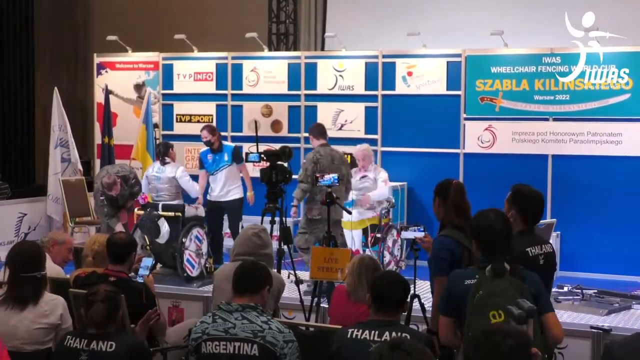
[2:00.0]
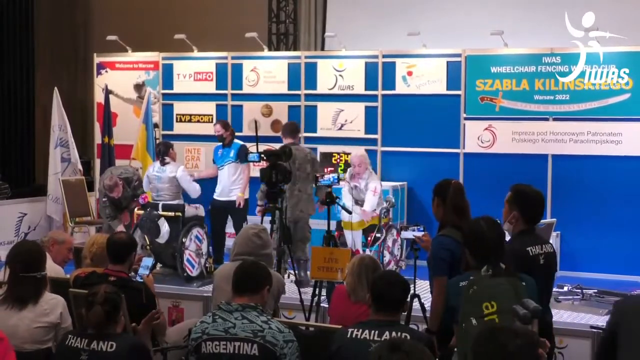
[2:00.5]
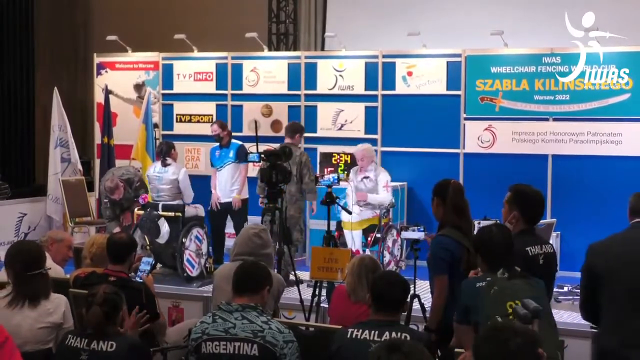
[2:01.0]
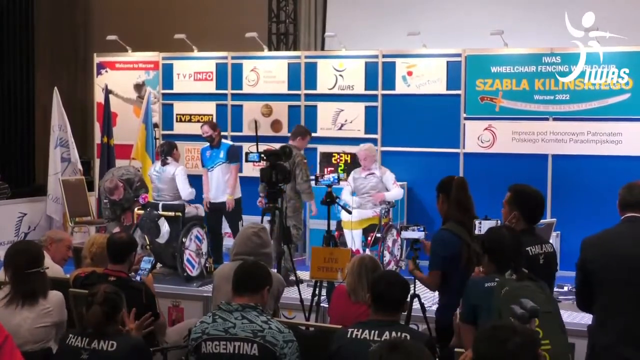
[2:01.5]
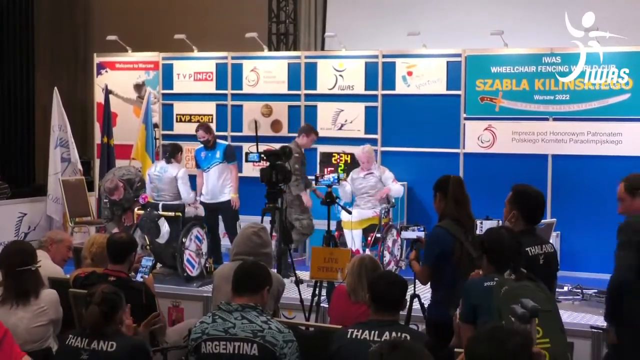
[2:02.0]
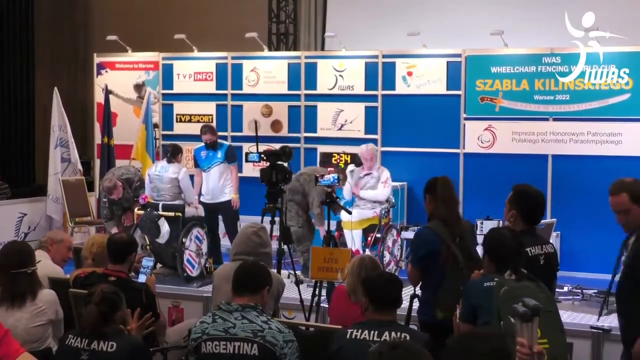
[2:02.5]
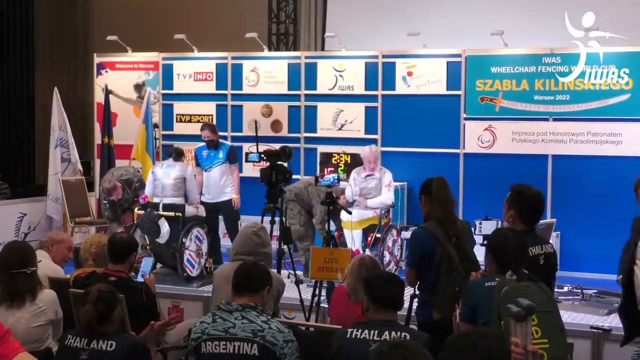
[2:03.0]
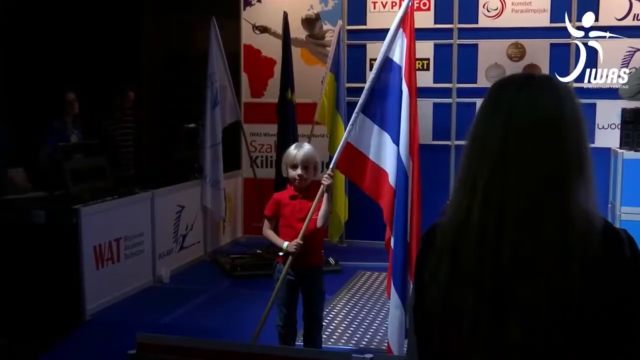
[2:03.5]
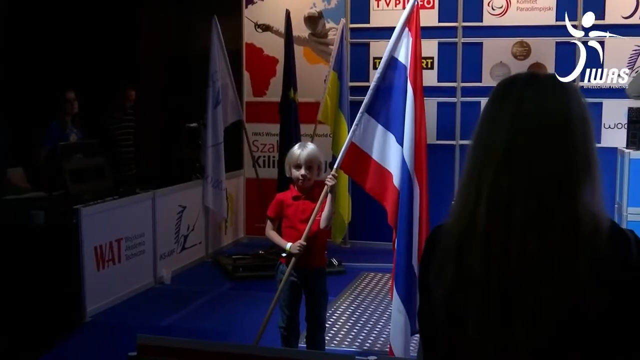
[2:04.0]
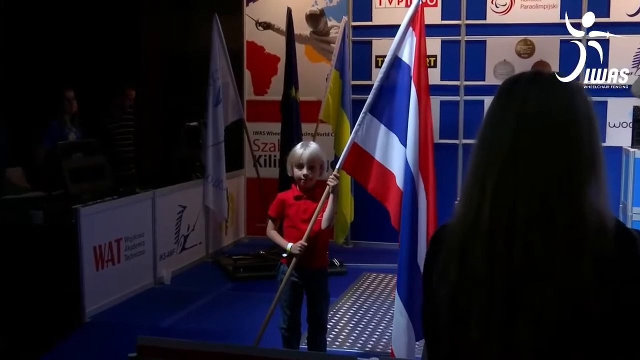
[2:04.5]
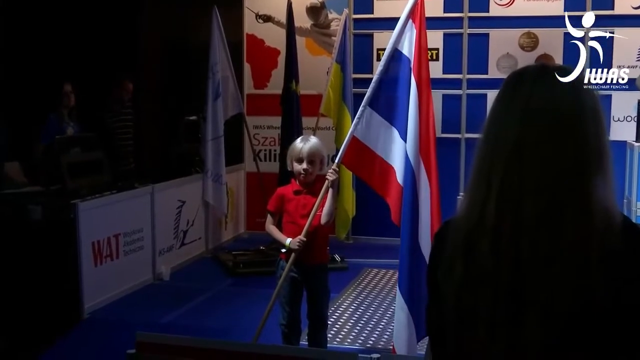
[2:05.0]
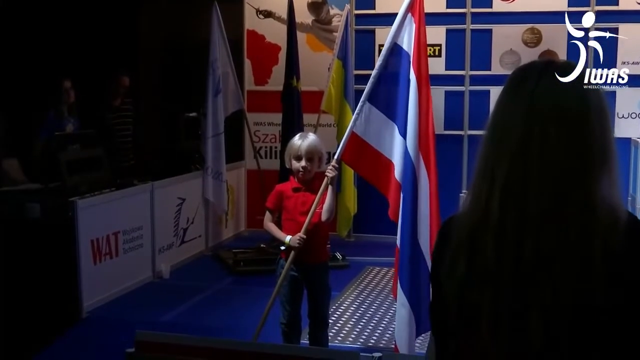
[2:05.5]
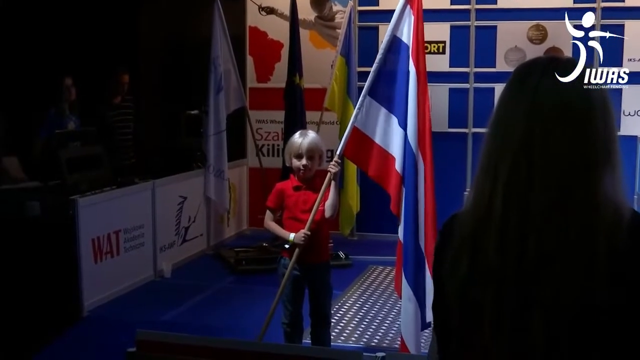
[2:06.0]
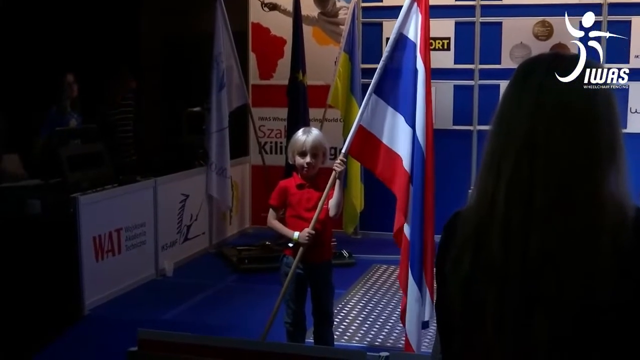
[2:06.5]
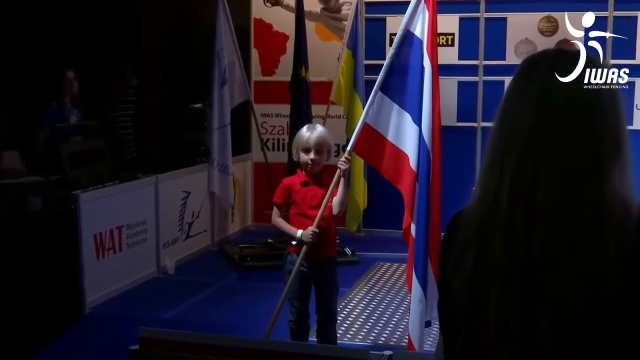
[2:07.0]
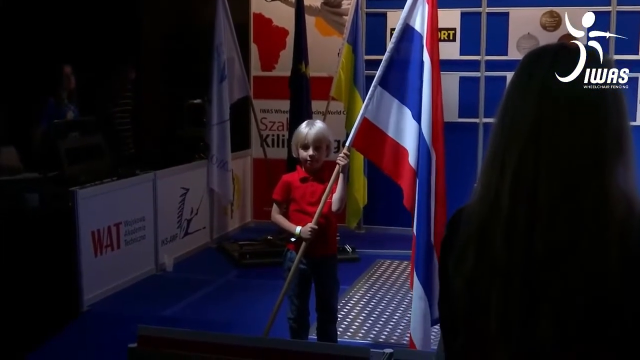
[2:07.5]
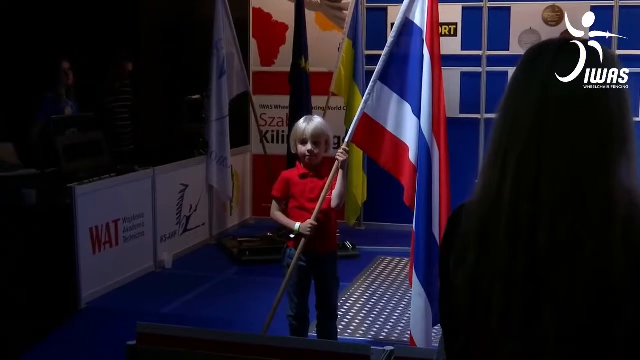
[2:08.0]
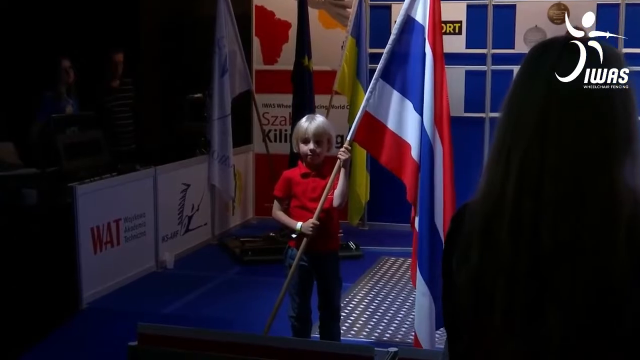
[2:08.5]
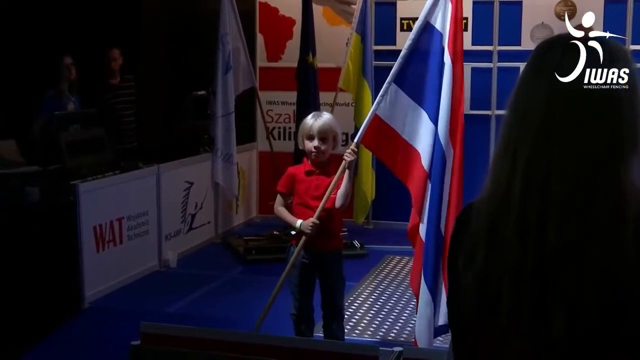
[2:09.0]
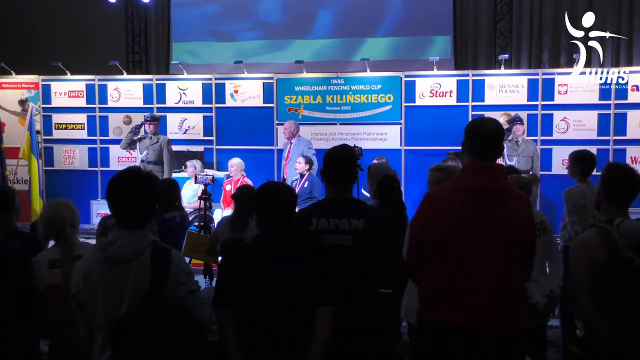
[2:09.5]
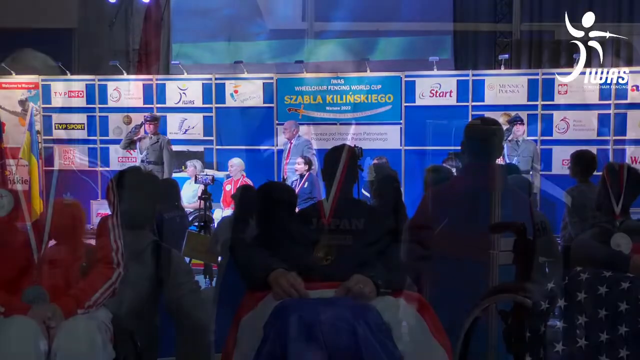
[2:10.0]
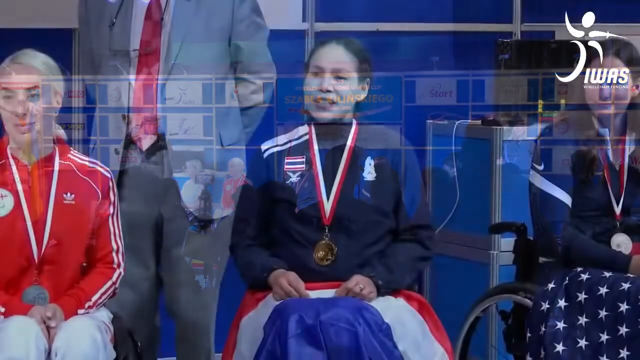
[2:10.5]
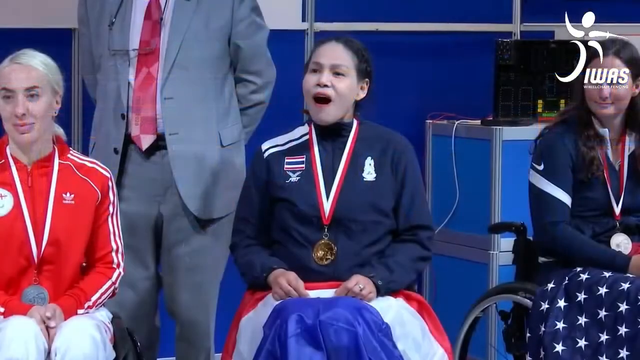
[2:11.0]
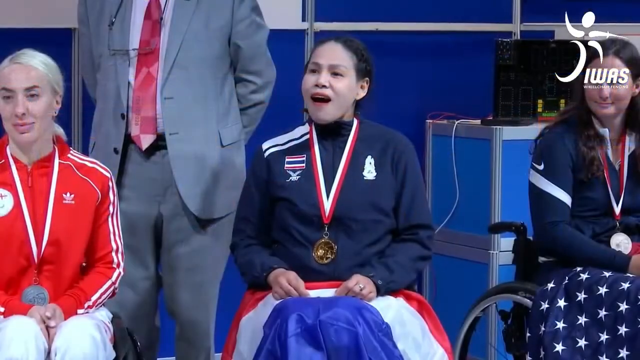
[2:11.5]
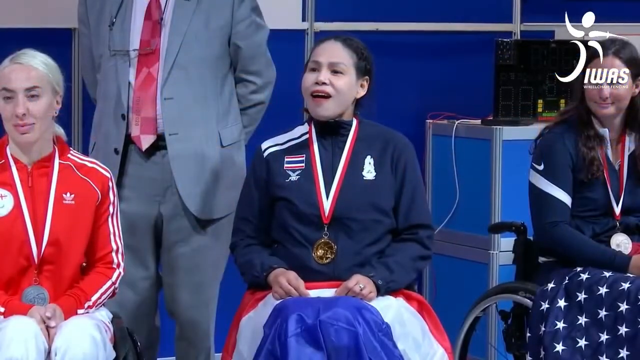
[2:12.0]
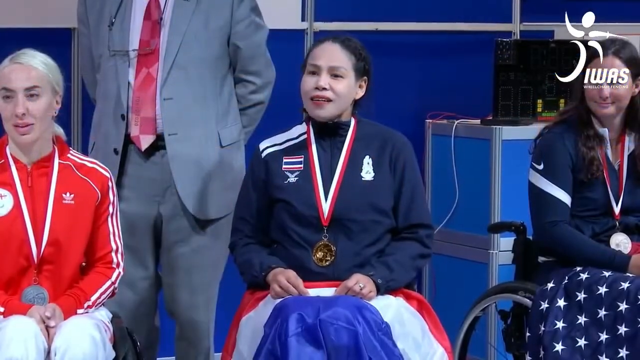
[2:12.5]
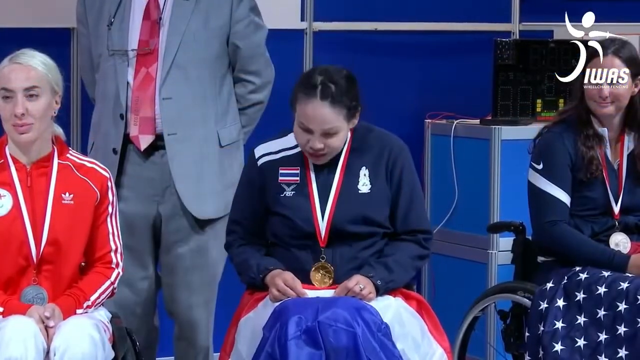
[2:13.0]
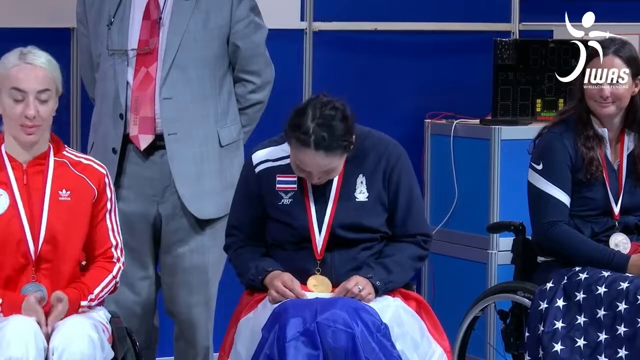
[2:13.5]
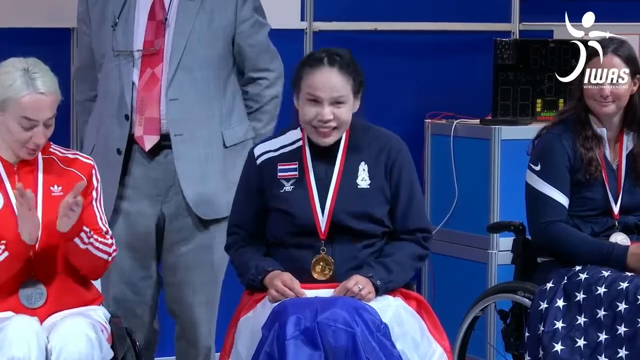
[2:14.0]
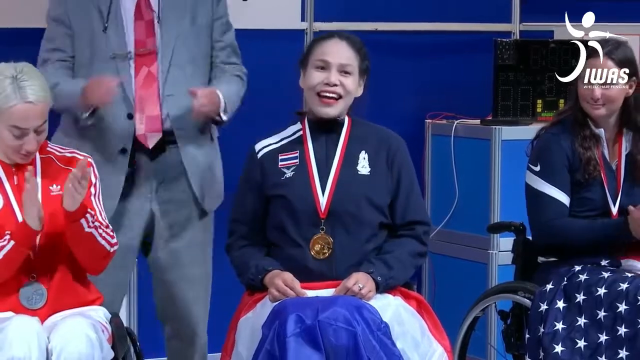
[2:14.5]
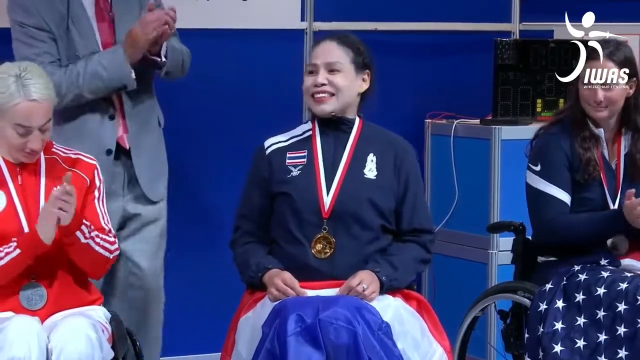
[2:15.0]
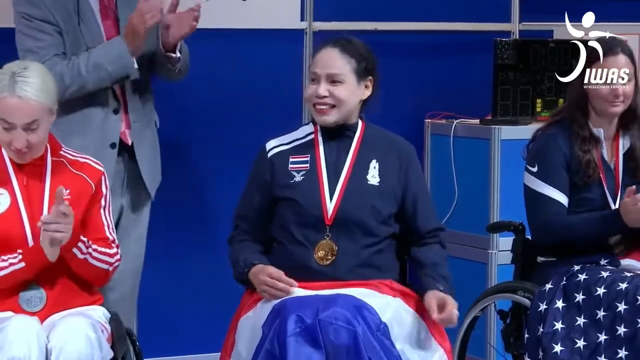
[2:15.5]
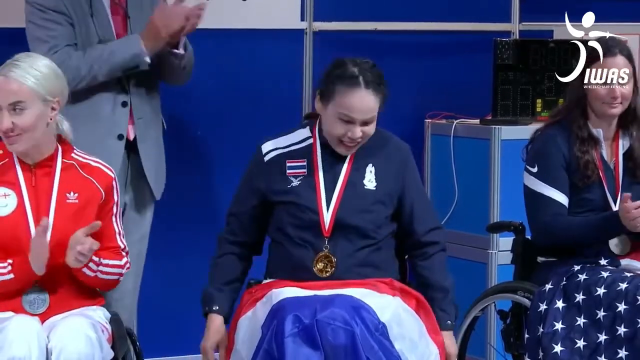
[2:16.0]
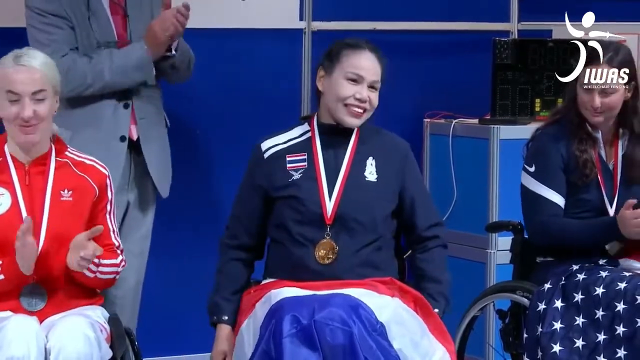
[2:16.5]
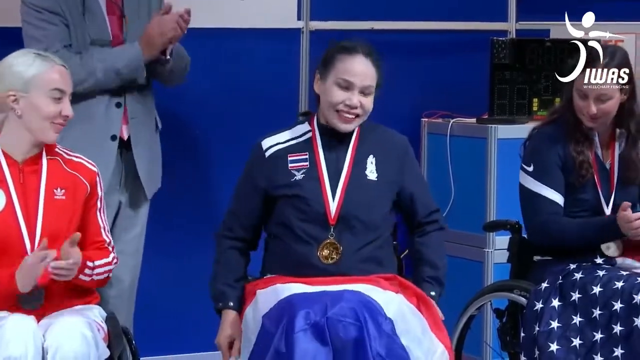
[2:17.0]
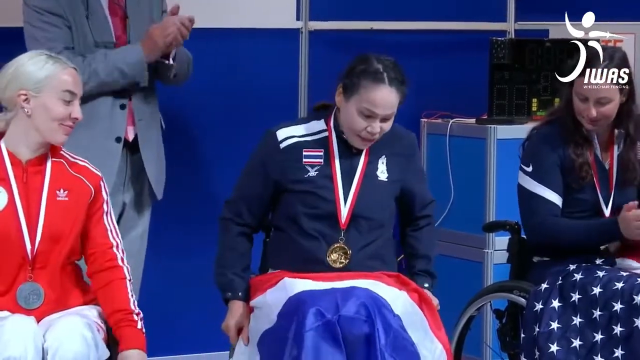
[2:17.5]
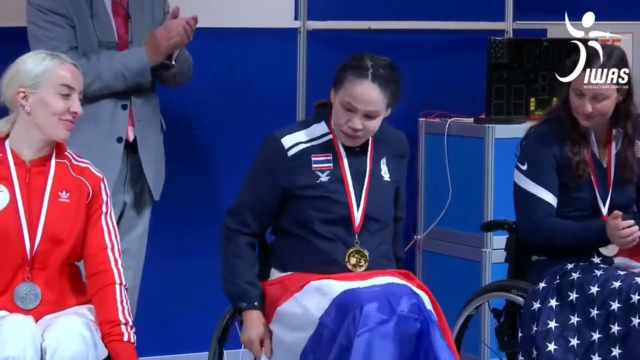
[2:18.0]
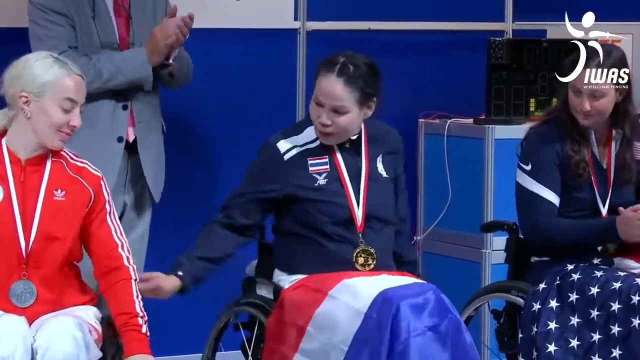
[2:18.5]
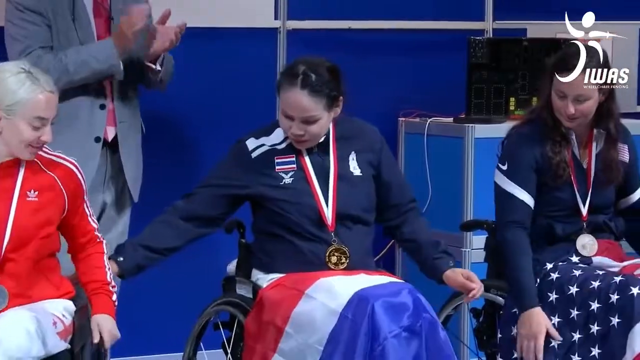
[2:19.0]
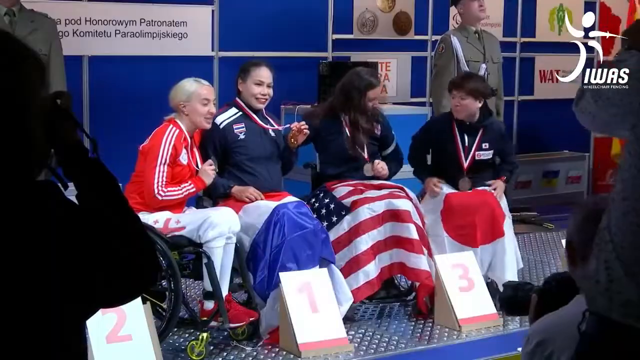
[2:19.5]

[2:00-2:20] Spectators in the front stand up as the match on the stage is over. Both contestants are female: the one on the left has dark hair and the one on the right has blonde hair. Two coaches come up to each athlete. A little kid with blonde hair, wearing a red shirt and blue jeans, holds a very large flag with horizontal red, white and blue stripes. Next, the two contestants are shown with the winner in the middle wearing a gold medal around her neck and the one who lost on the left wearing a silver medal. The person in the center looks very happy and bows, and the person on the left claps. A person on the right also claps; this person also wears a medal and has a United States flag in their lap.